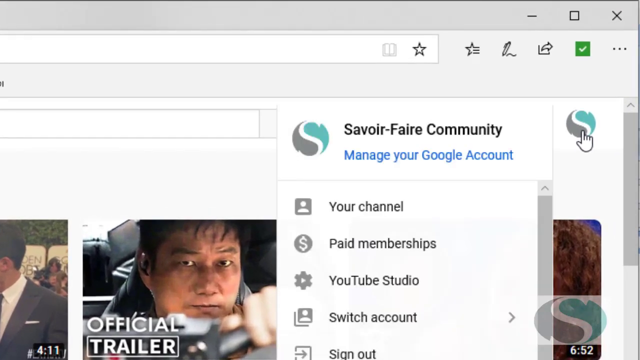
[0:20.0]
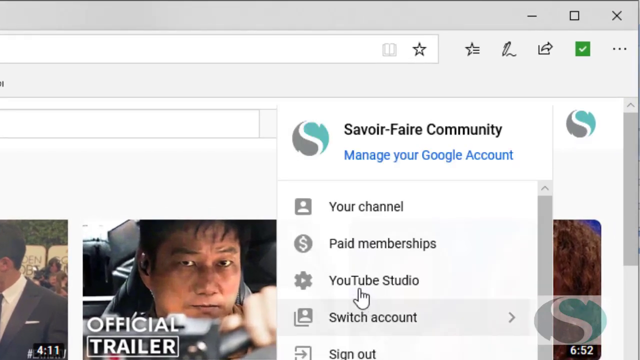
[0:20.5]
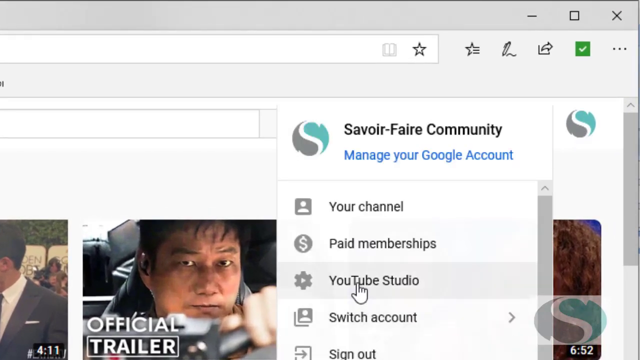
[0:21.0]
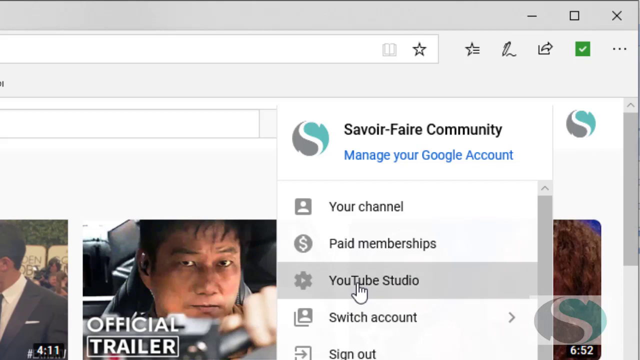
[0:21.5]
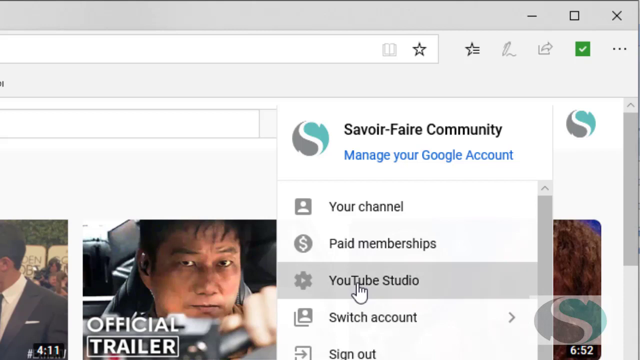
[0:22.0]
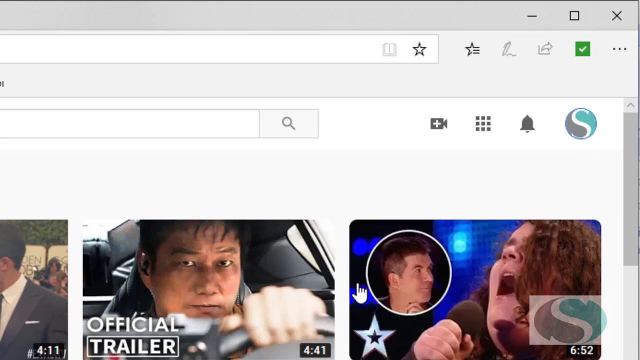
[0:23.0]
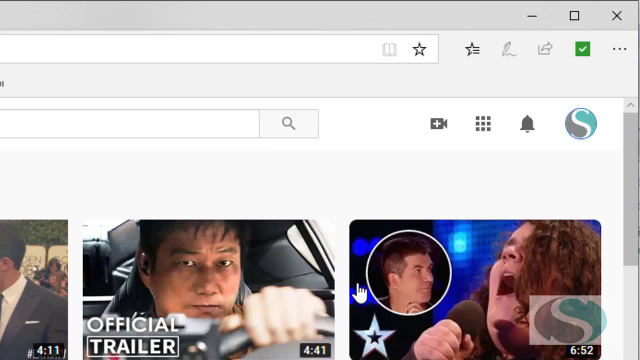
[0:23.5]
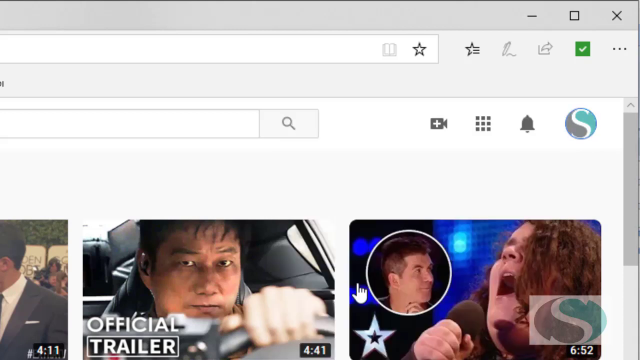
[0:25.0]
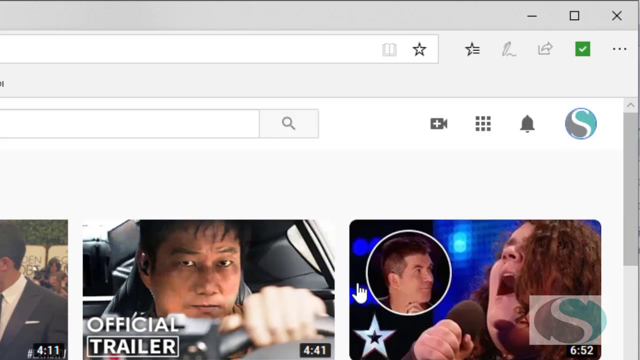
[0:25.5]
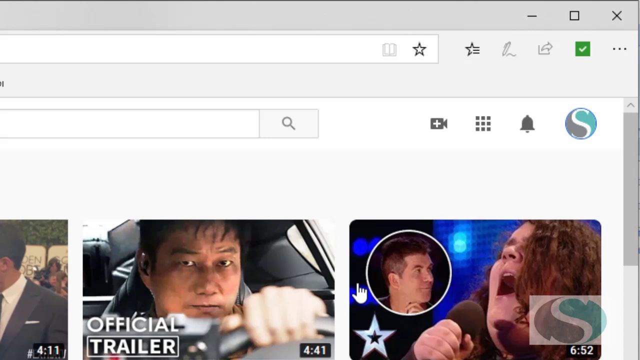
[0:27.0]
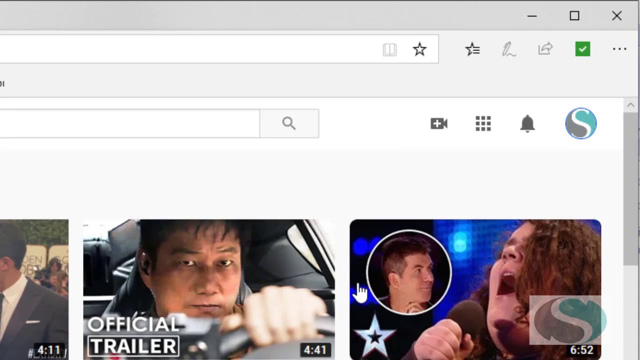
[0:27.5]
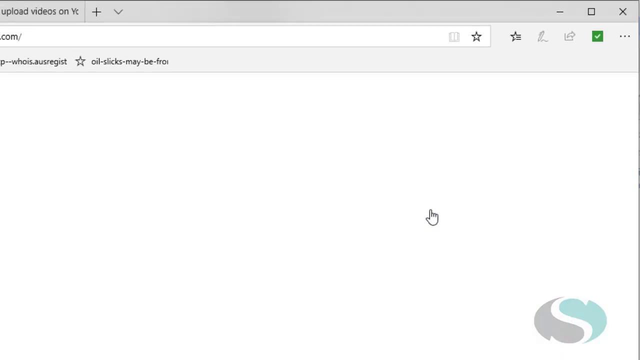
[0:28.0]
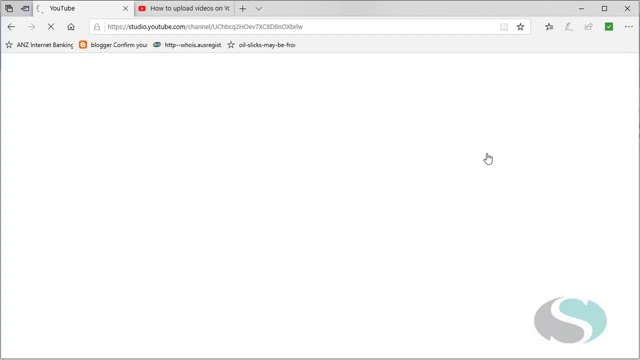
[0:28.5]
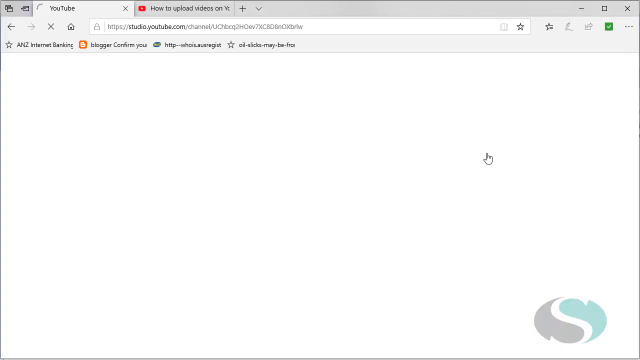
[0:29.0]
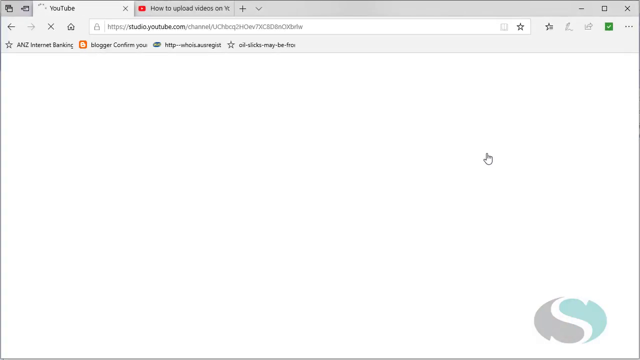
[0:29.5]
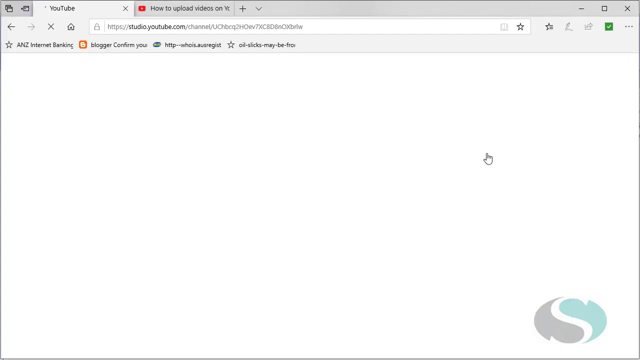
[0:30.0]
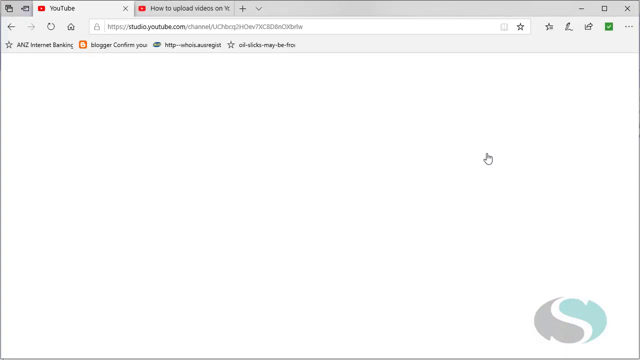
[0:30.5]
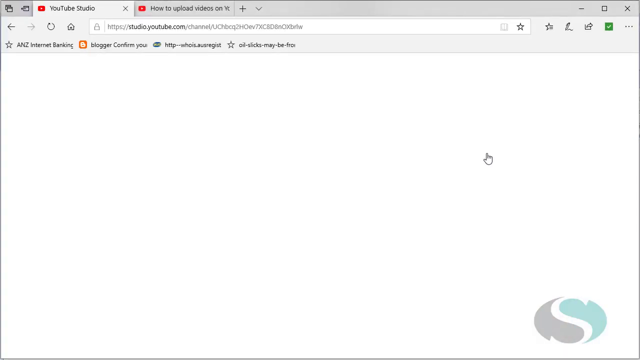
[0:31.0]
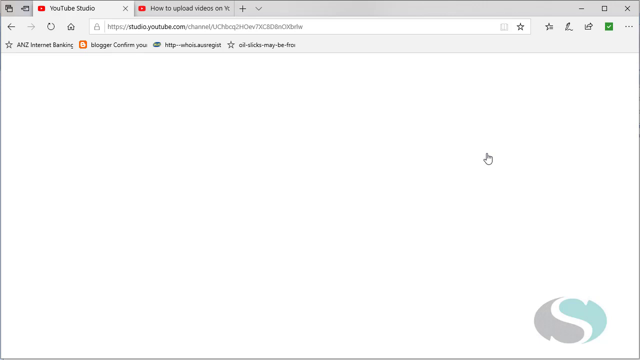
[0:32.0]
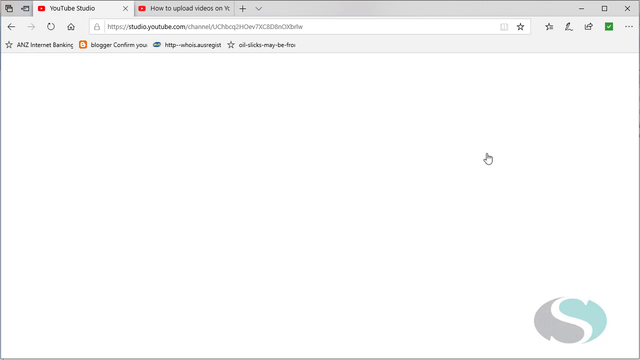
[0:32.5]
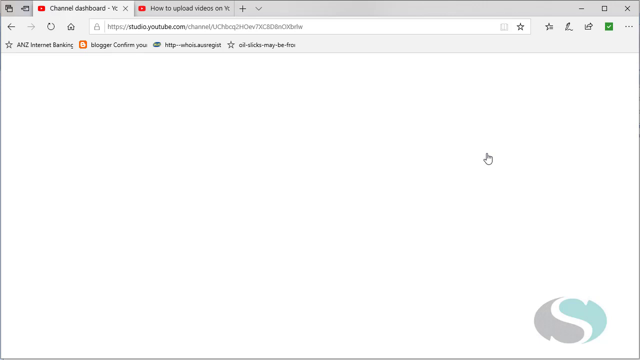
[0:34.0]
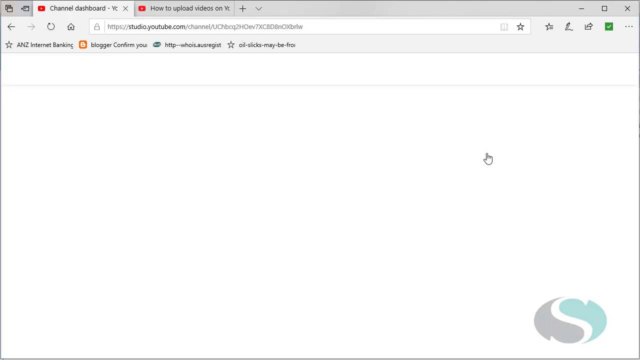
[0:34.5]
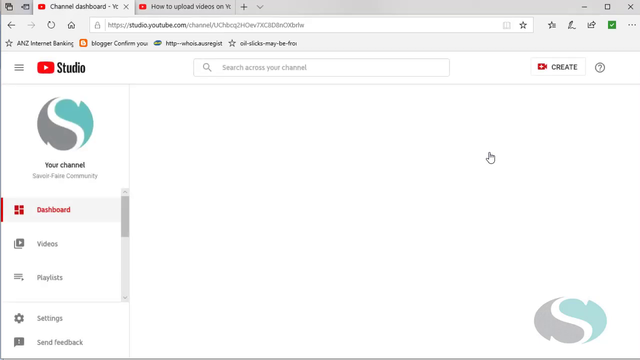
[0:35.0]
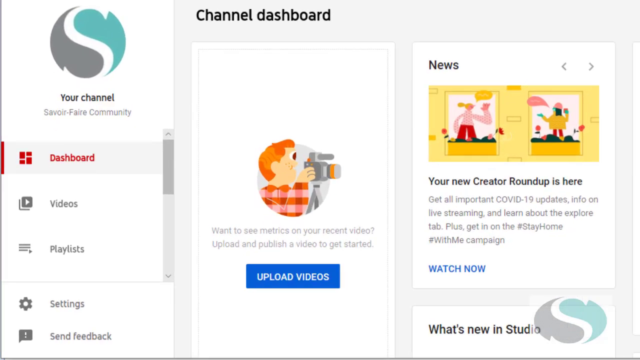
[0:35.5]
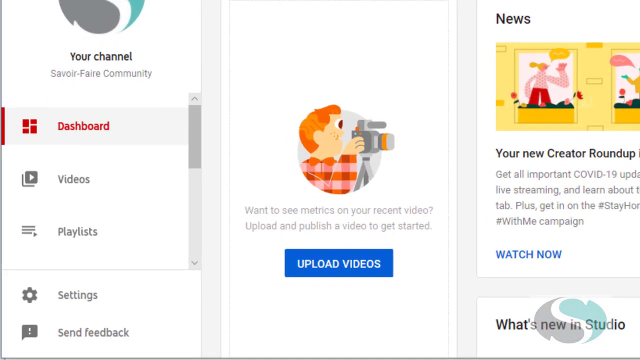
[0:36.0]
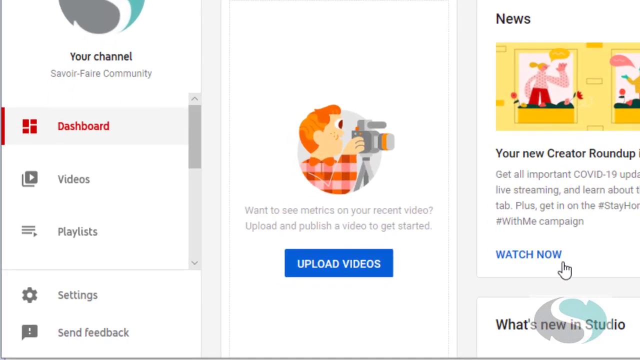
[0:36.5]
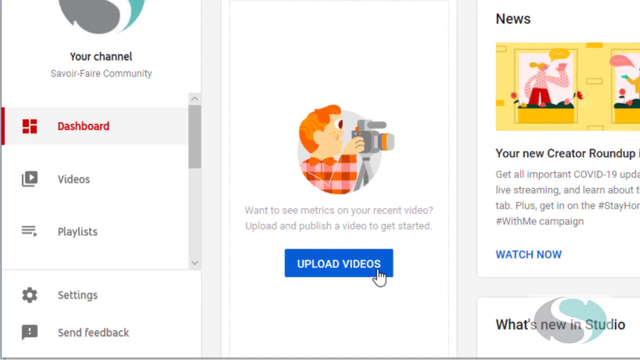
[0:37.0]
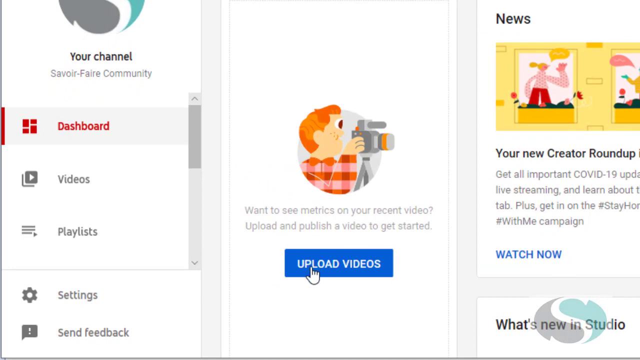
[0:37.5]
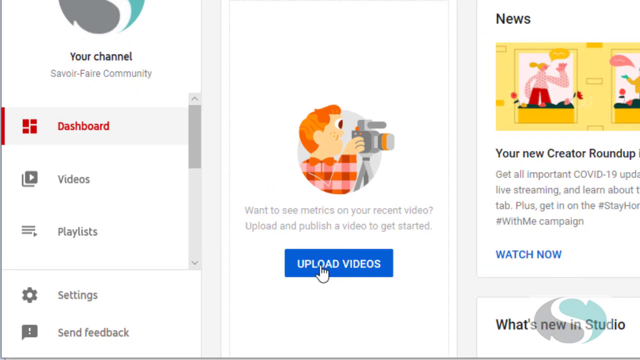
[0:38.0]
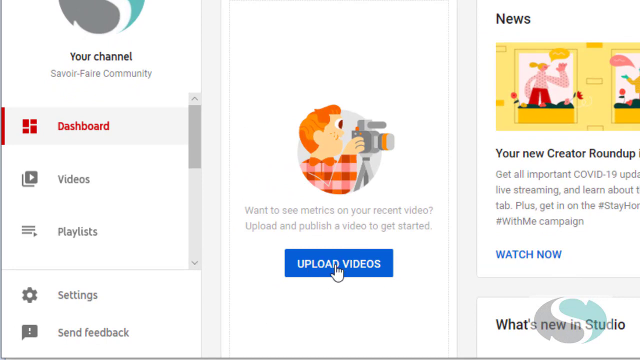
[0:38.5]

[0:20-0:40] The user turns to the YouTube Studio option in the drop-down menu, which has a cog next to it, and clicks it. Nothing happens at first, but as the view zooms out it goes to a web address, probably the account's YouTube dashboard. The dashboard then loads; underneath "dashboard" are "videos," "playlists," and "settings," each with a corresponding icon. On the right side is an area reading "Upload Videos," and the user seems interested in it, hovering around it as if about to click. Right above that button is what seems to be computer graphic art of a character, apparently a male figure holding a camera. Further on the right side is "News," followed by text beginning "Your New Creator Roundup."